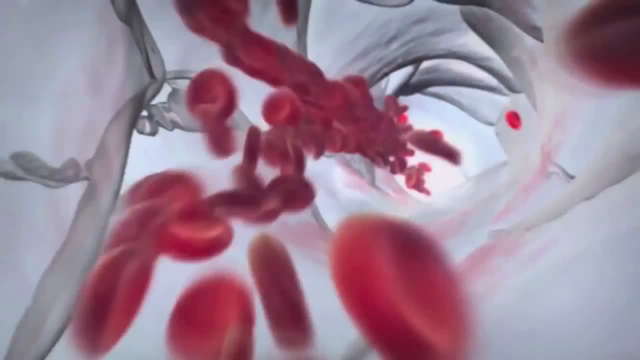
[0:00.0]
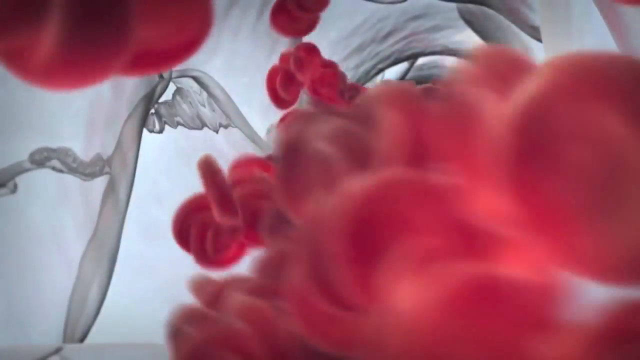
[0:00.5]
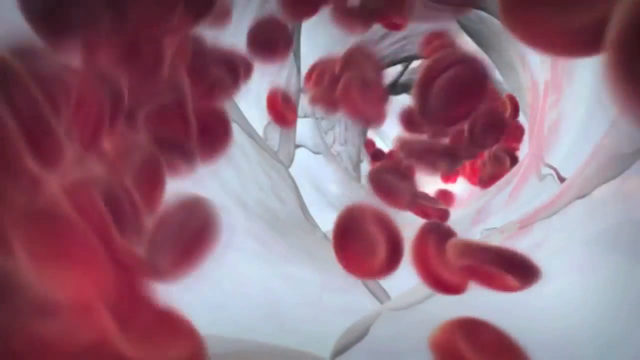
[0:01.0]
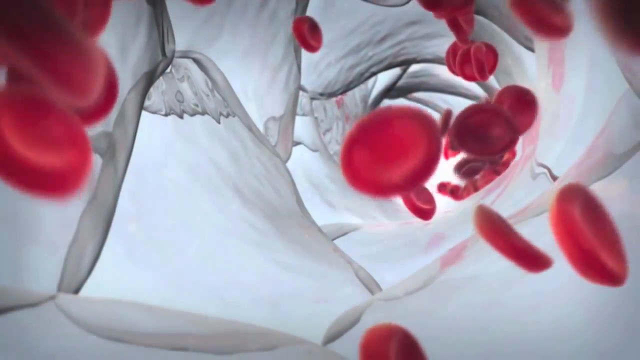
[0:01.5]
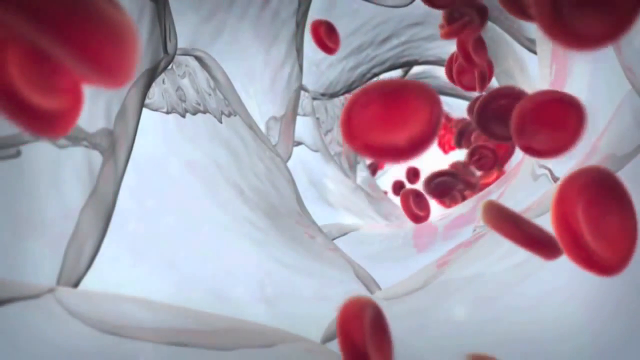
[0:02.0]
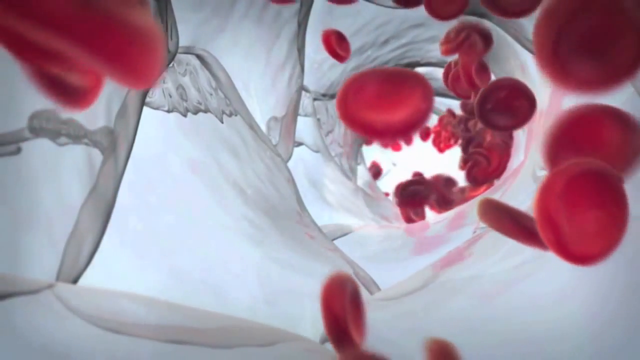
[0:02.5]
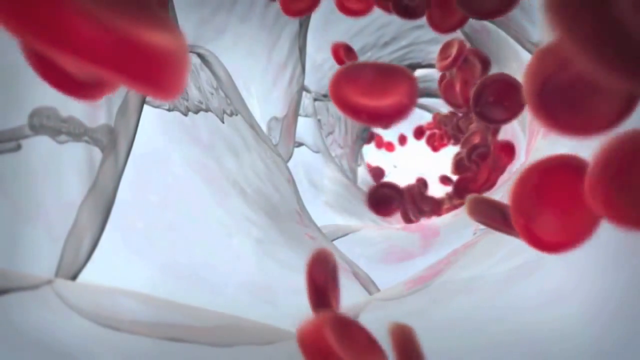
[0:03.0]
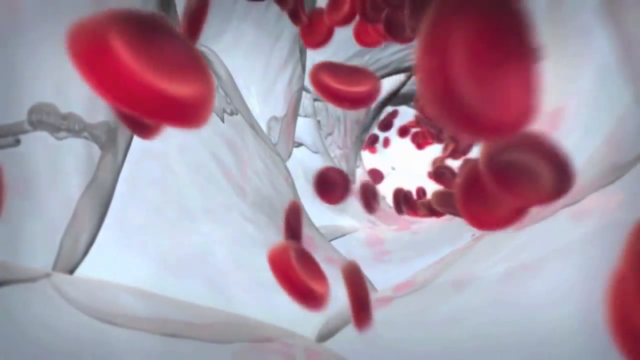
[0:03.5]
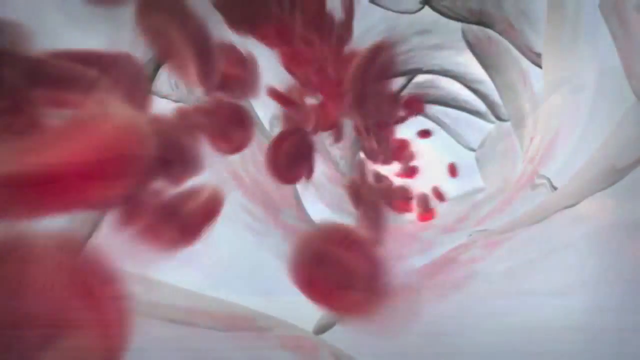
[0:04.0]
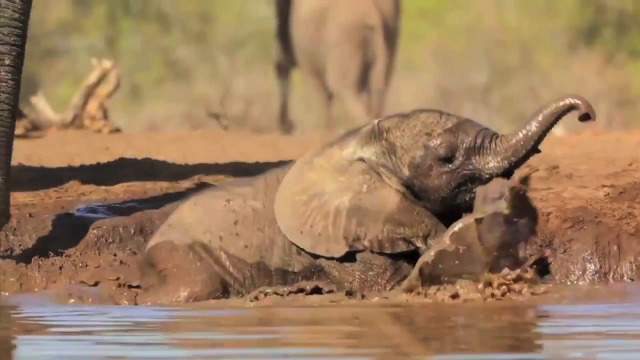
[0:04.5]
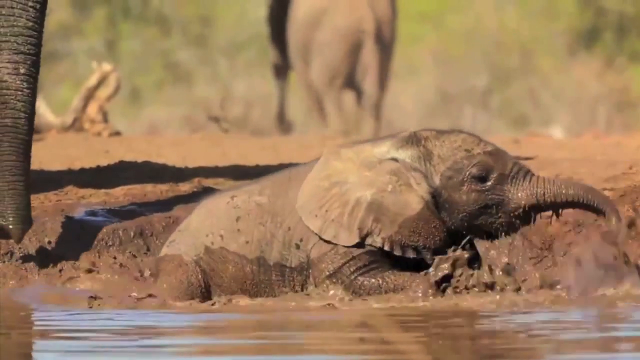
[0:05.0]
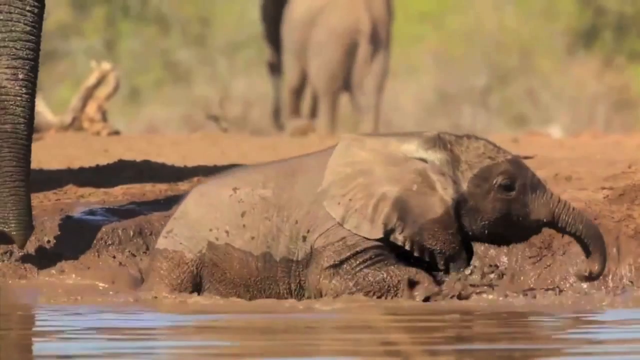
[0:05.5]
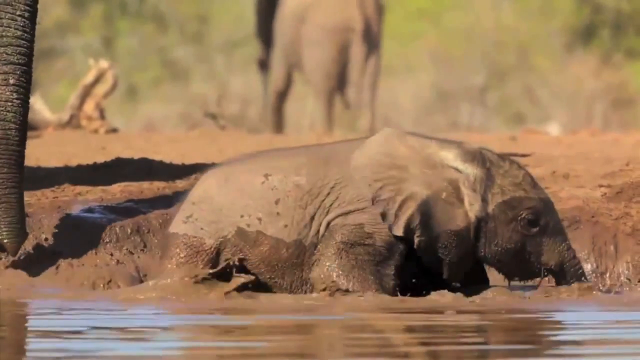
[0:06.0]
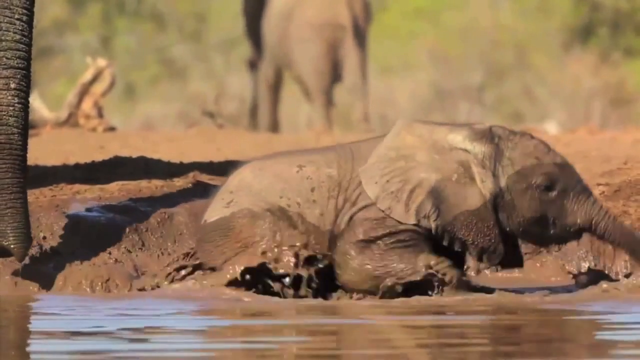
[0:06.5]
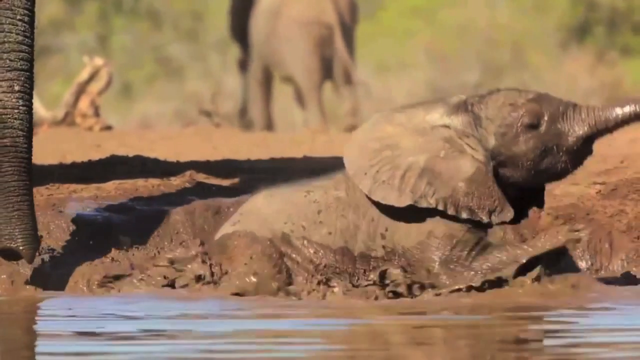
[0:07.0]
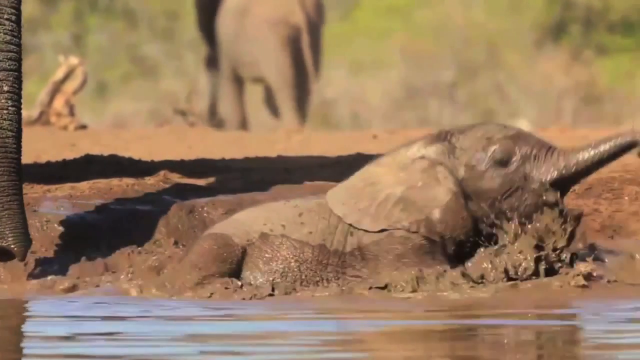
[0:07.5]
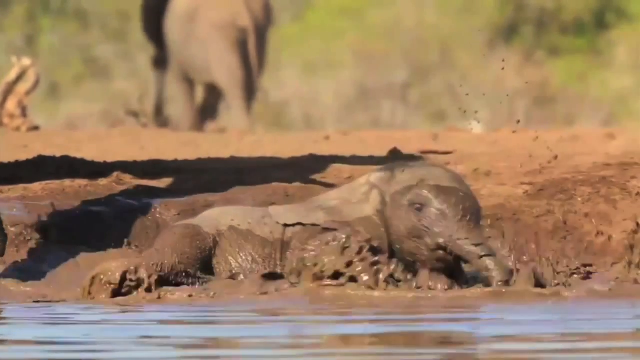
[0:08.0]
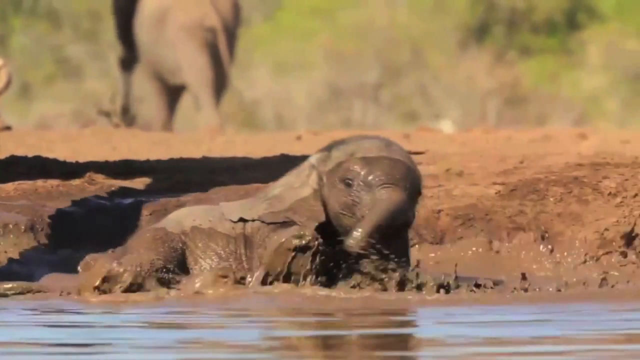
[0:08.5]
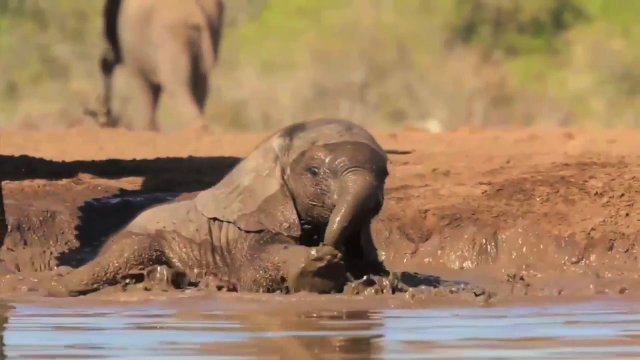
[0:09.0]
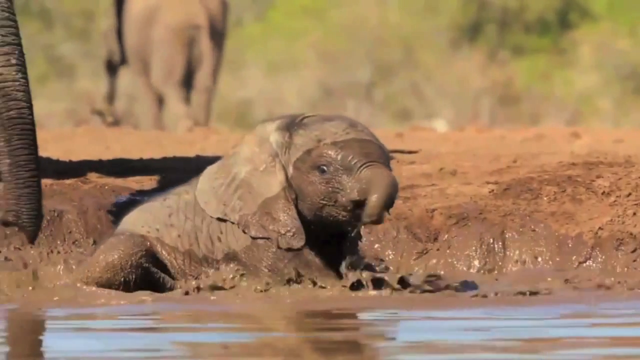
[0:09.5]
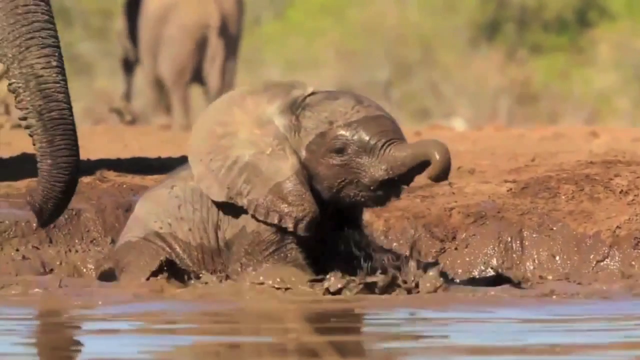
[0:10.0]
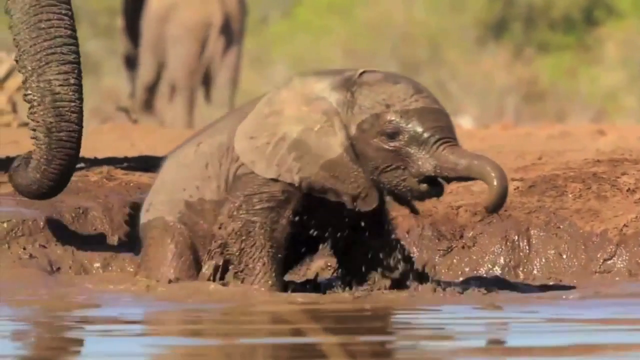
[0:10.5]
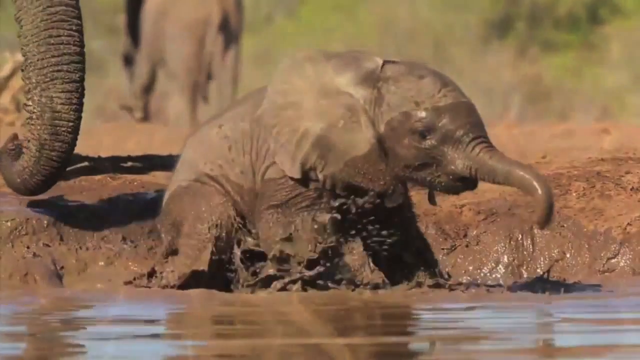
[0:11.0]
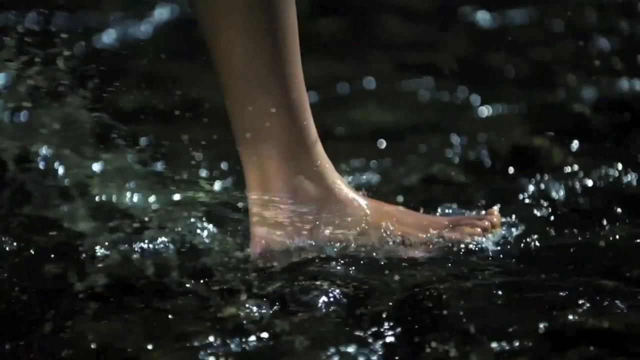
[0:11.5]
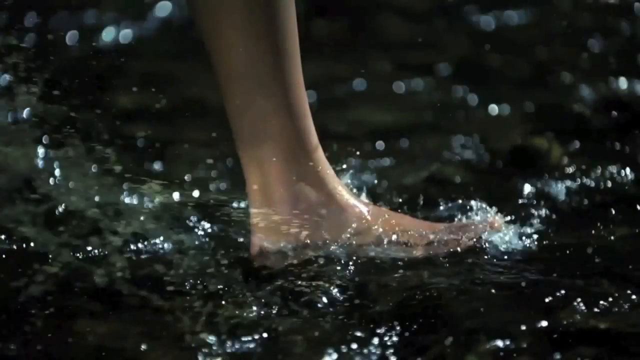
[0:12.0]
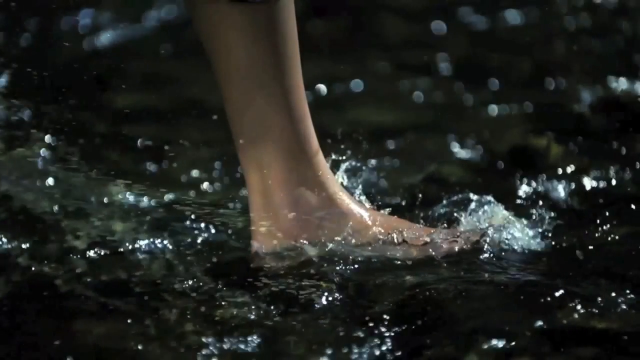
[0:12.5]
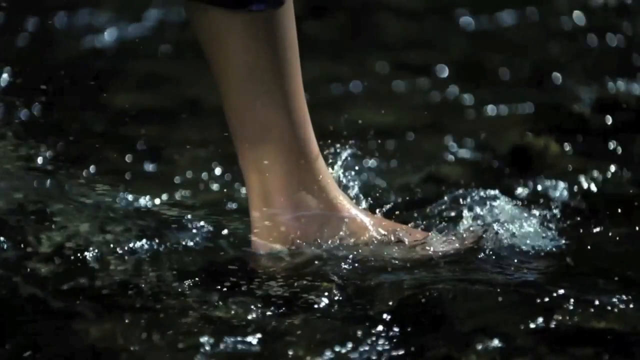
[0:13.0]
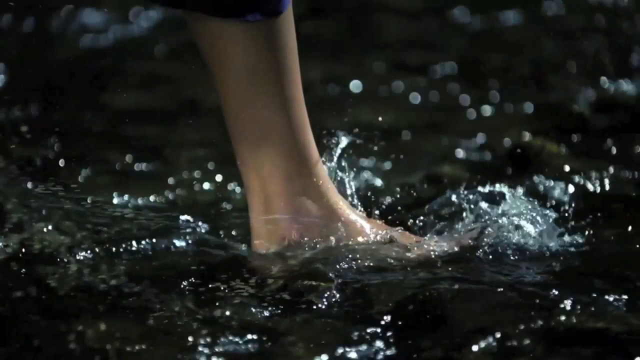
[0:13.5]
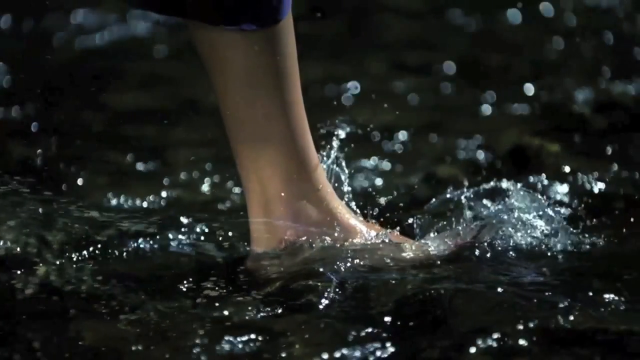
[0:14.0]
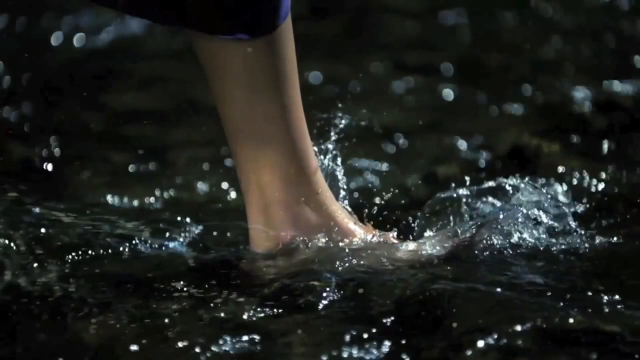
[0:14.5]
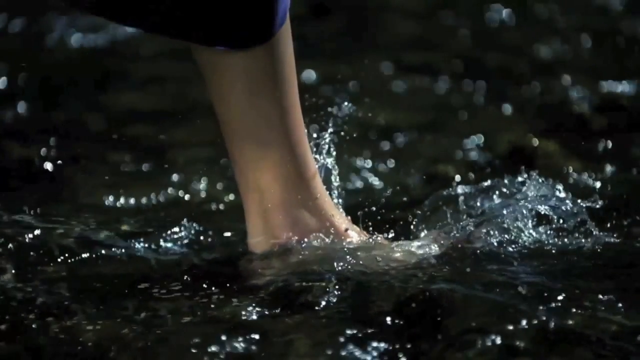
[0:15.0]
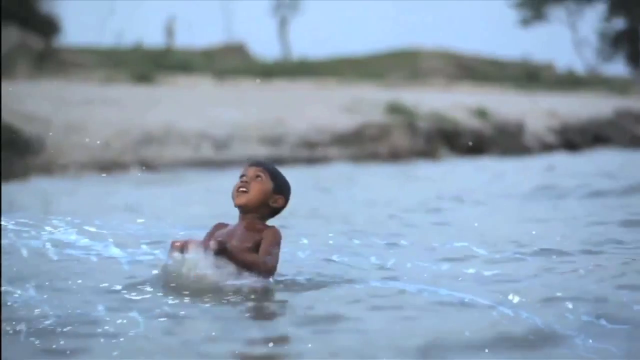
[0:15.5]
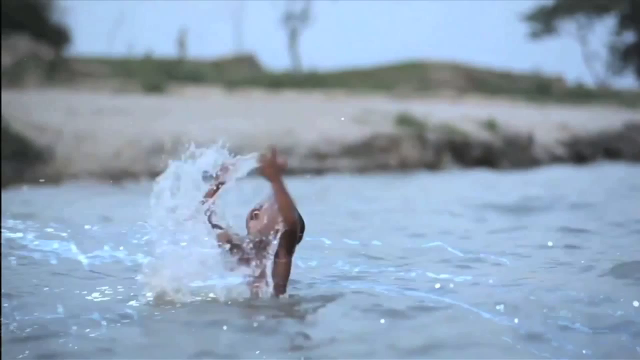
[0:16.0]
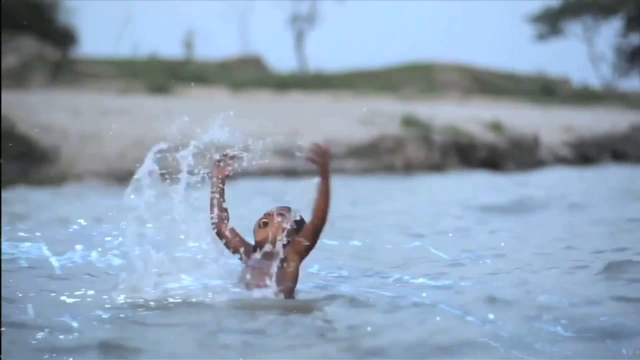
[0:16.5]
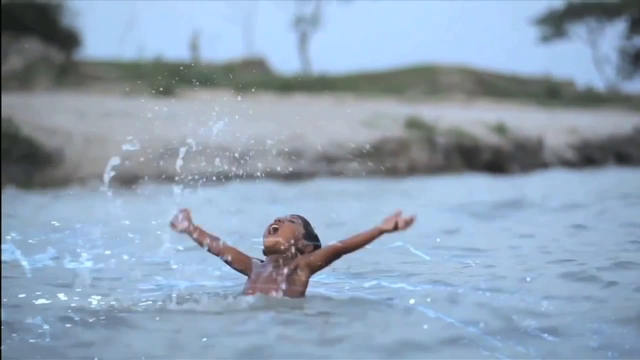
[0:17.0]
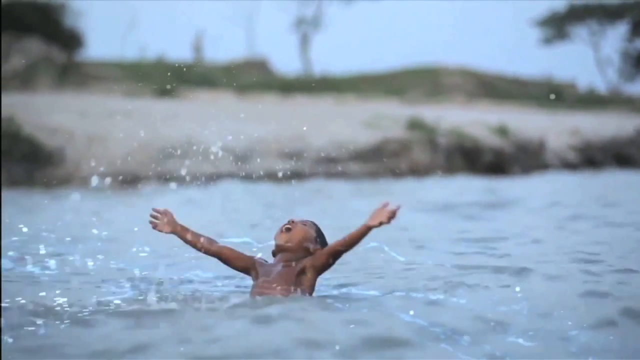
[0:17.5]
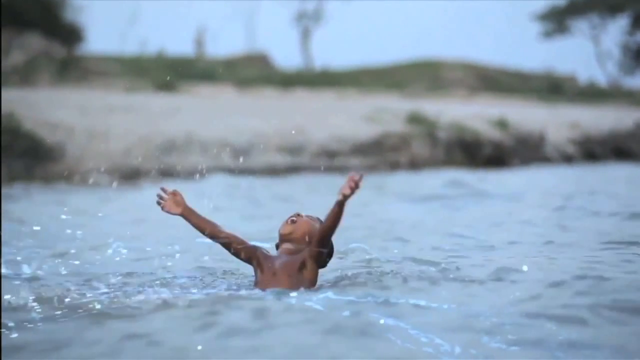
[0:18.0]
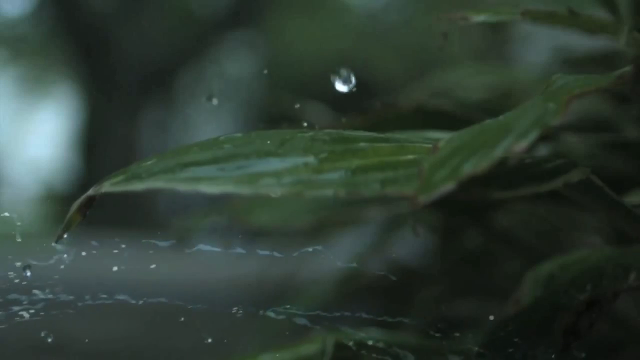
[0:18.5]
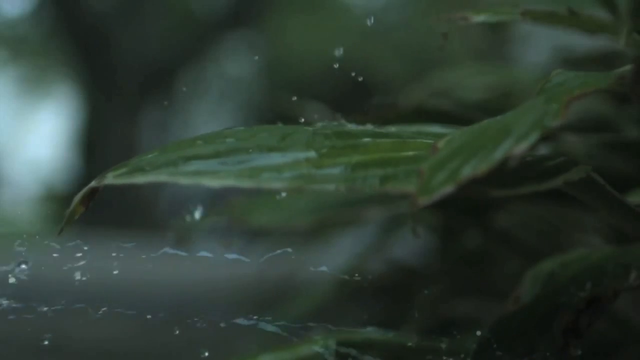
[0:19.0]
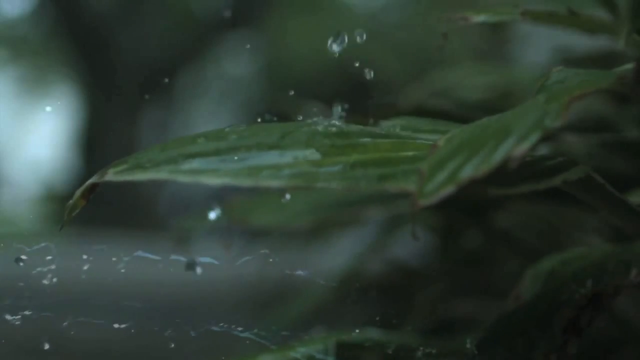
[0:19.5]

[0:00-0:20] The video opens with red blood cells flowing through a body. The scene changes to a baby elephant playing in the mud, clearly enjoying it; the elephant is half covered in mud. Next comes a flowing body of water, into which a woman puts her leg. Then a young boy swims in a body of water, splashing himself. After that, water droplets fall in slow motion onto a green leaf.